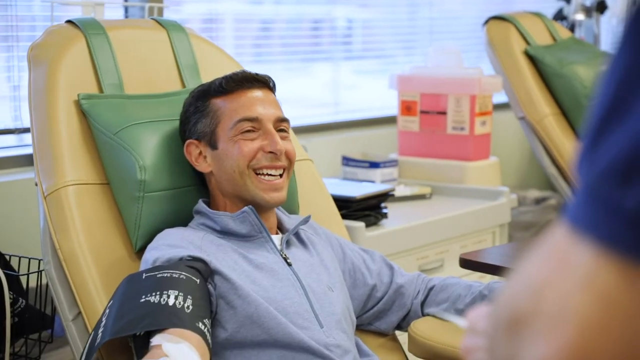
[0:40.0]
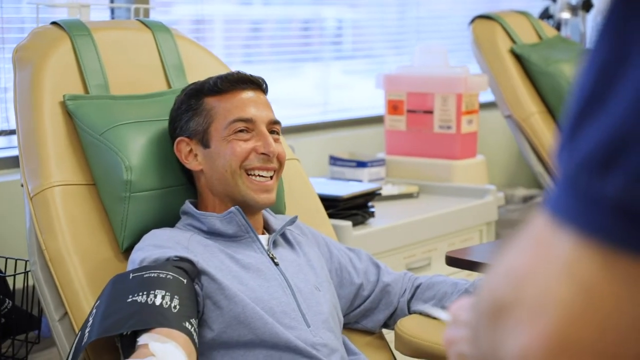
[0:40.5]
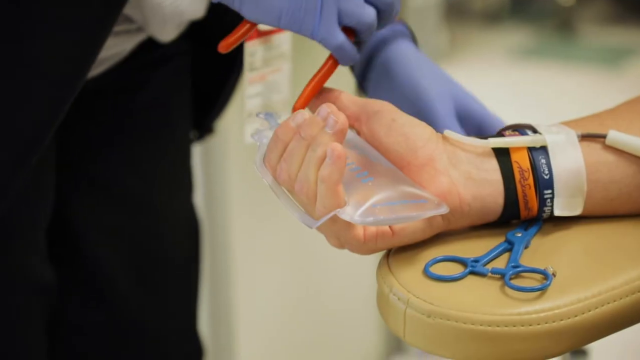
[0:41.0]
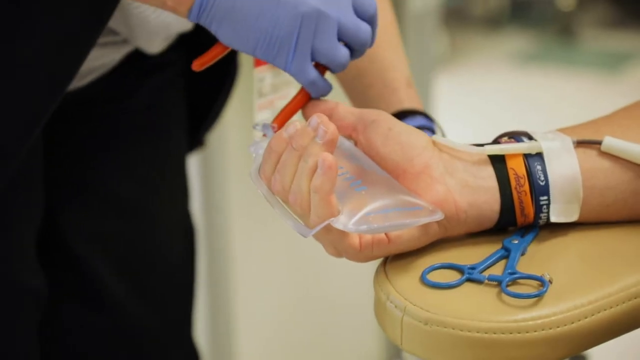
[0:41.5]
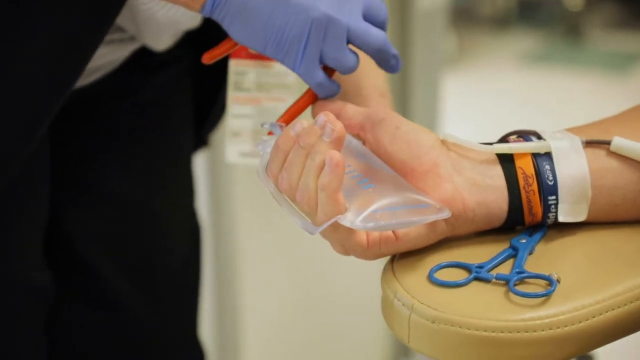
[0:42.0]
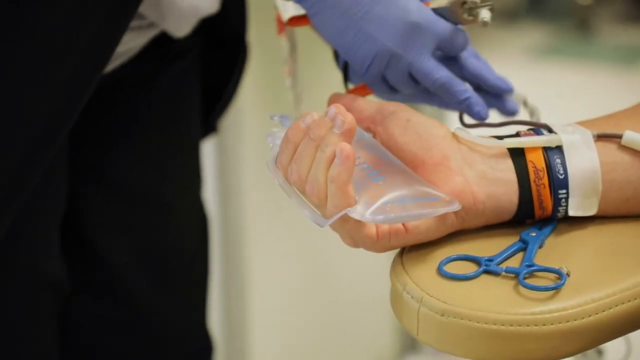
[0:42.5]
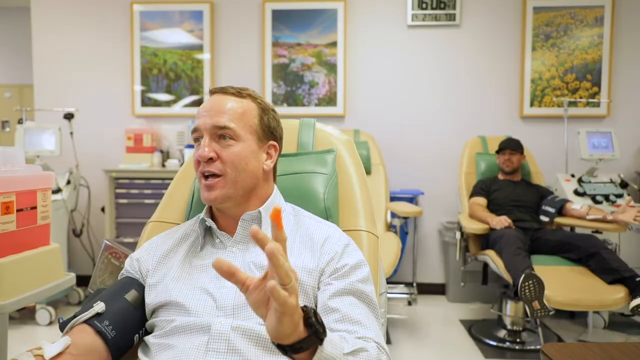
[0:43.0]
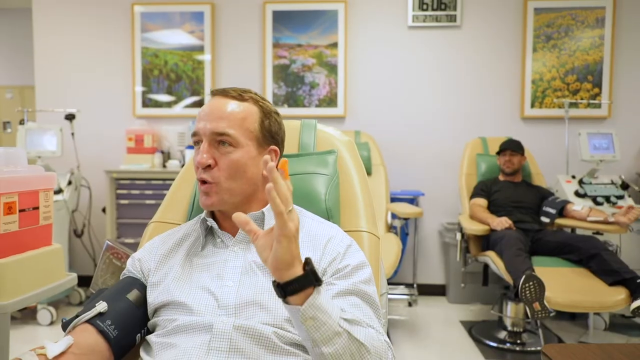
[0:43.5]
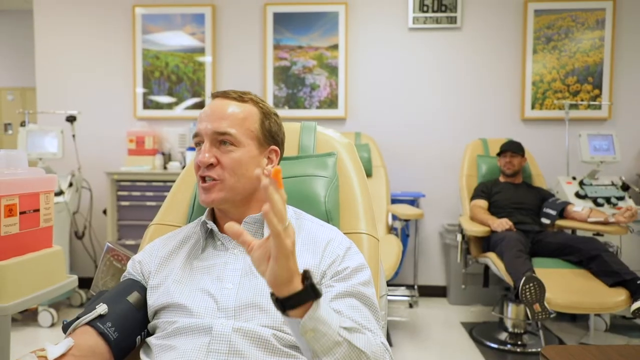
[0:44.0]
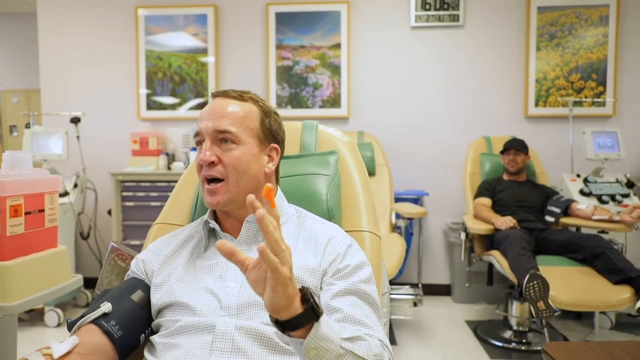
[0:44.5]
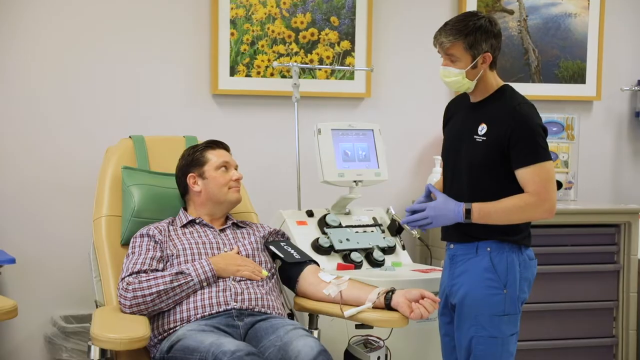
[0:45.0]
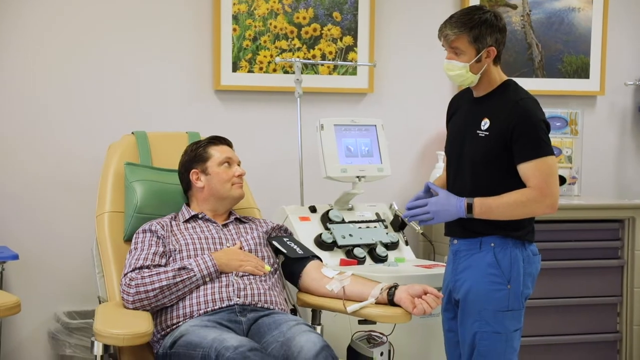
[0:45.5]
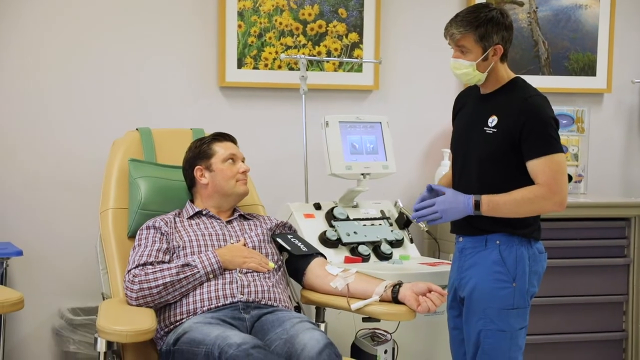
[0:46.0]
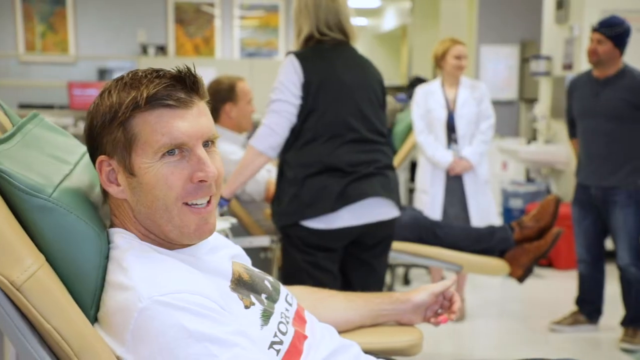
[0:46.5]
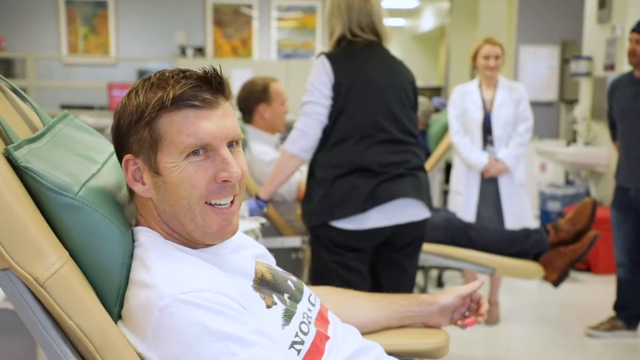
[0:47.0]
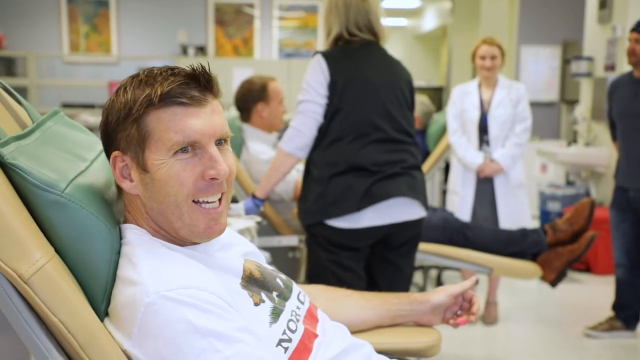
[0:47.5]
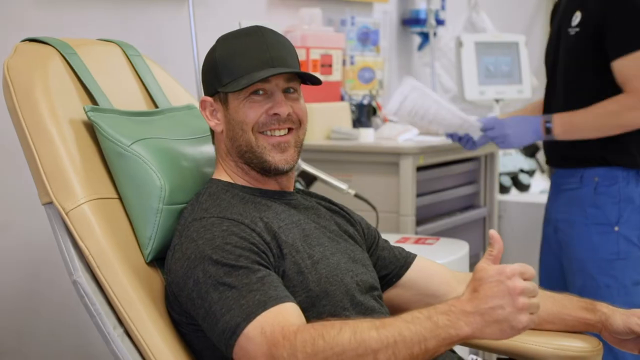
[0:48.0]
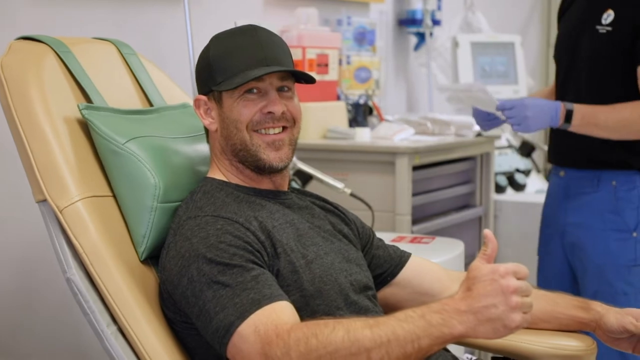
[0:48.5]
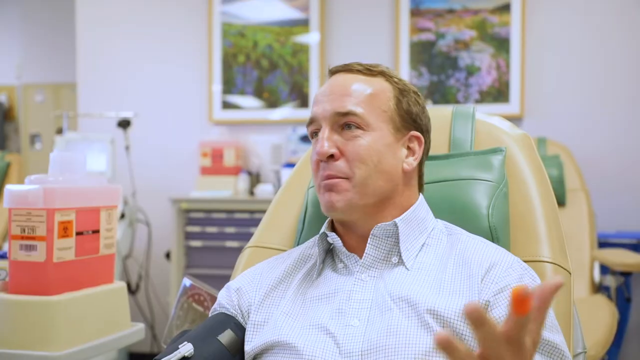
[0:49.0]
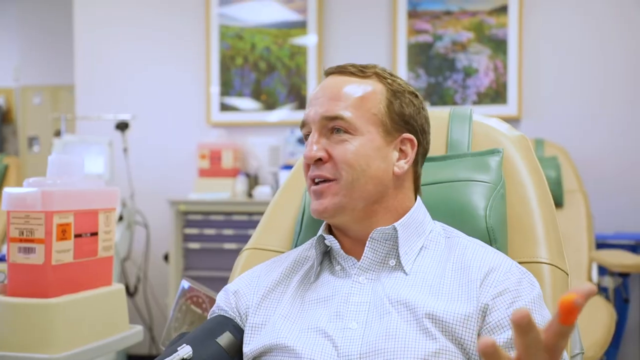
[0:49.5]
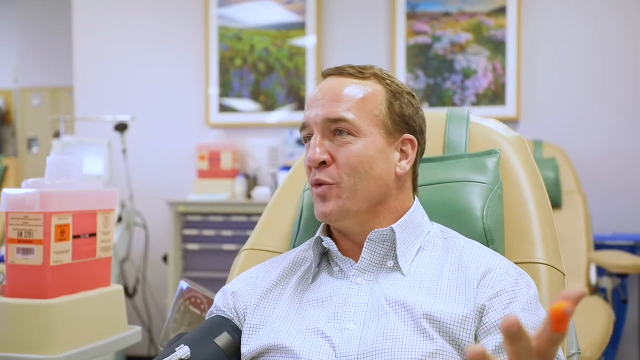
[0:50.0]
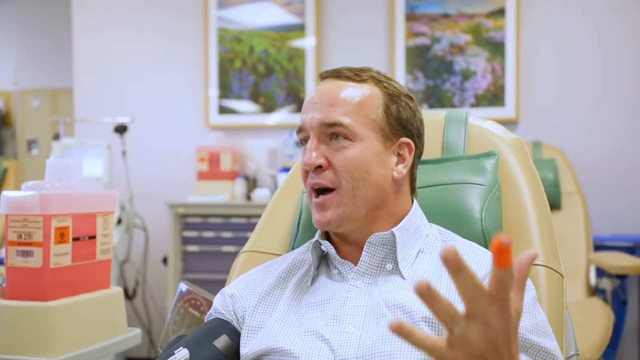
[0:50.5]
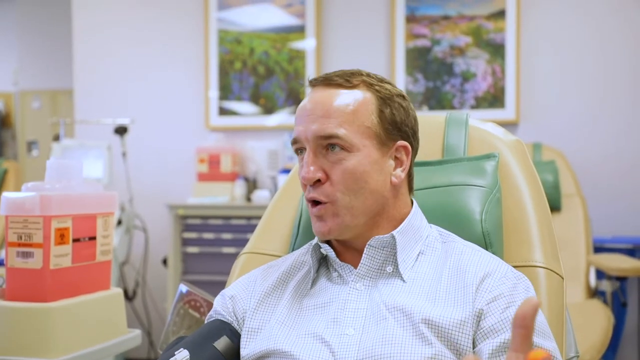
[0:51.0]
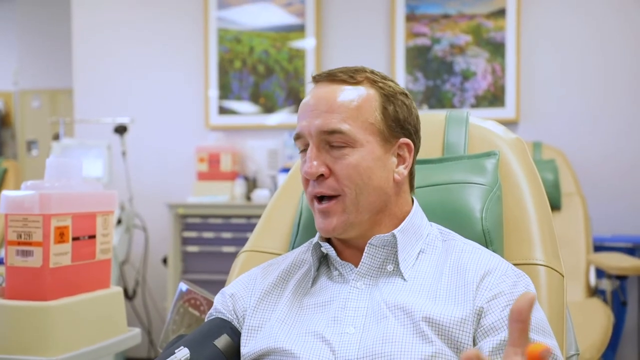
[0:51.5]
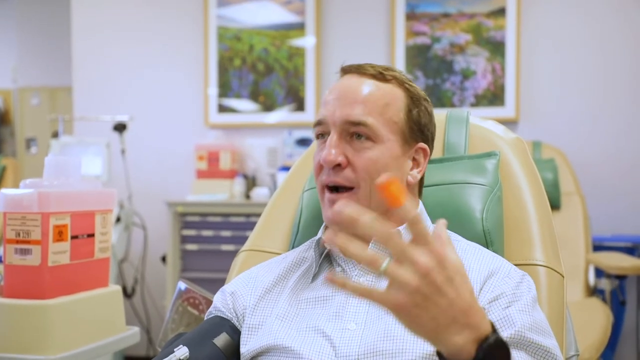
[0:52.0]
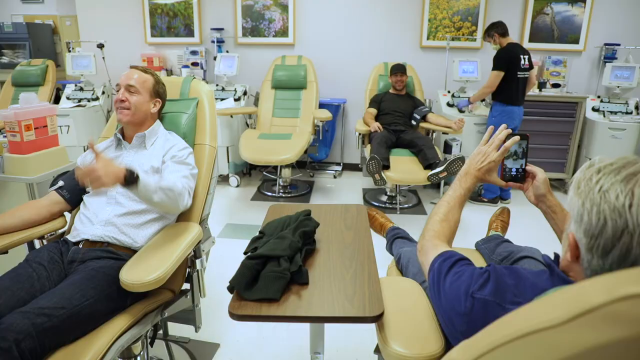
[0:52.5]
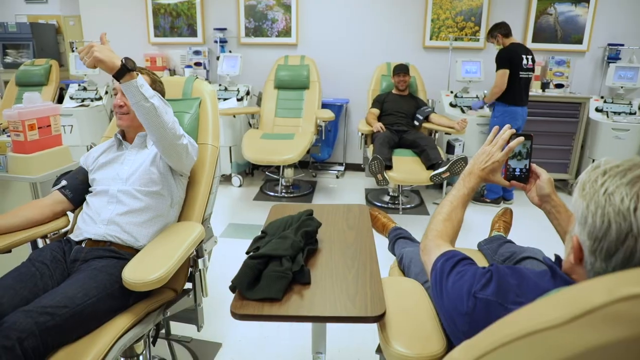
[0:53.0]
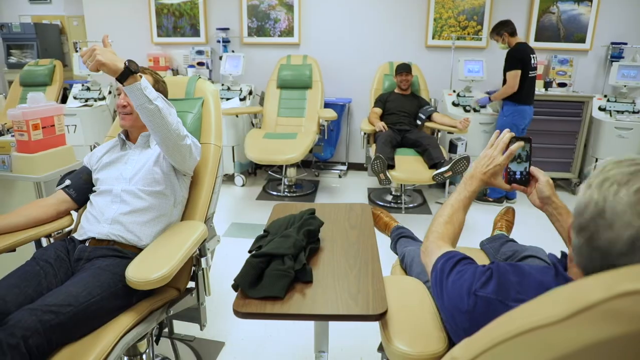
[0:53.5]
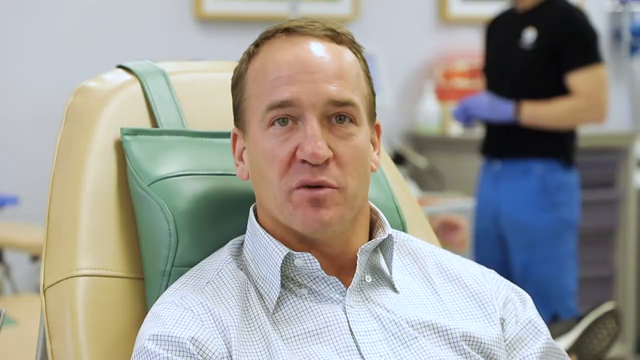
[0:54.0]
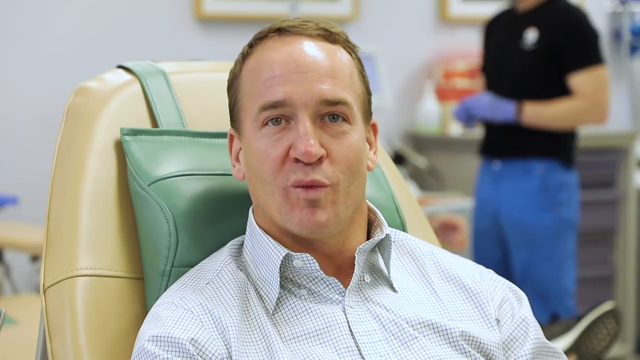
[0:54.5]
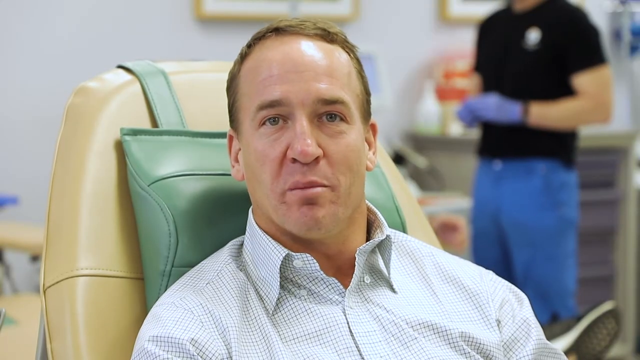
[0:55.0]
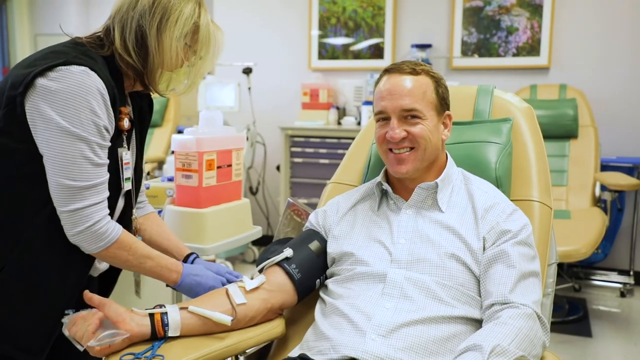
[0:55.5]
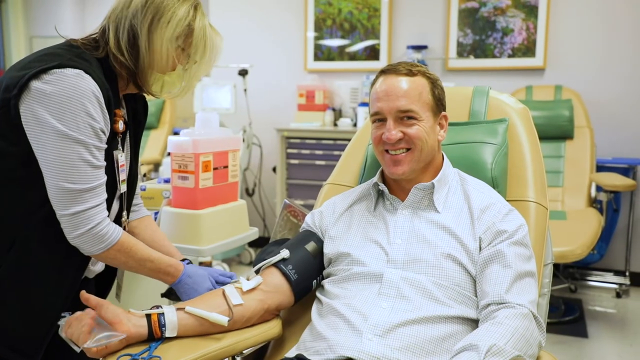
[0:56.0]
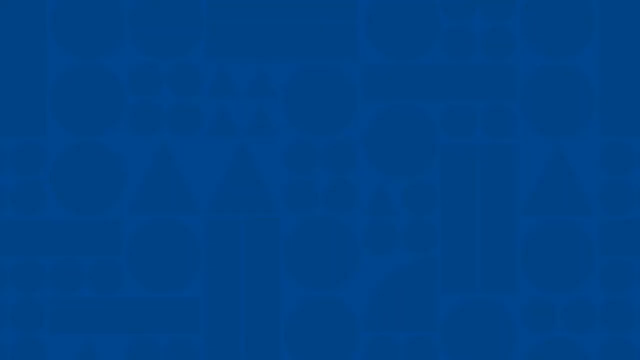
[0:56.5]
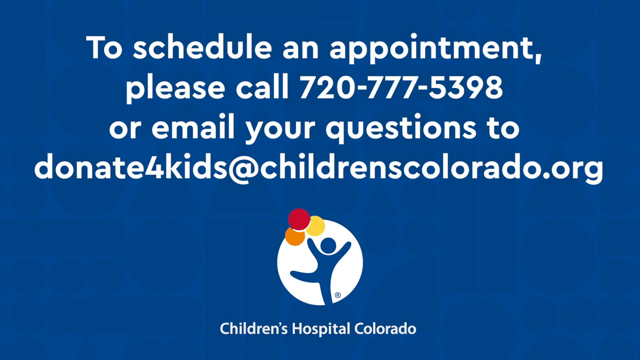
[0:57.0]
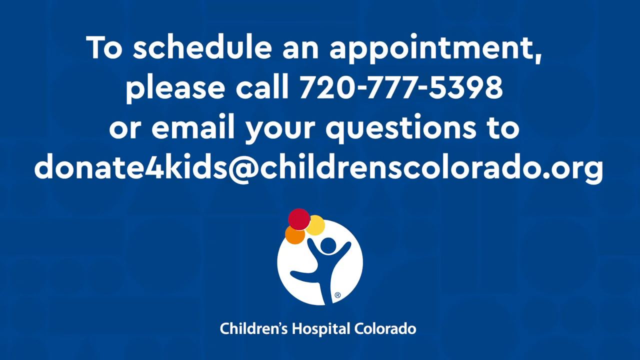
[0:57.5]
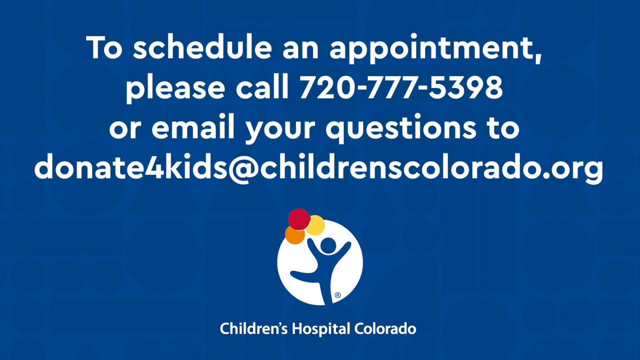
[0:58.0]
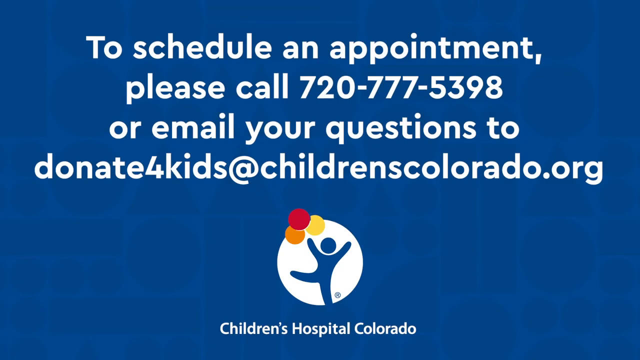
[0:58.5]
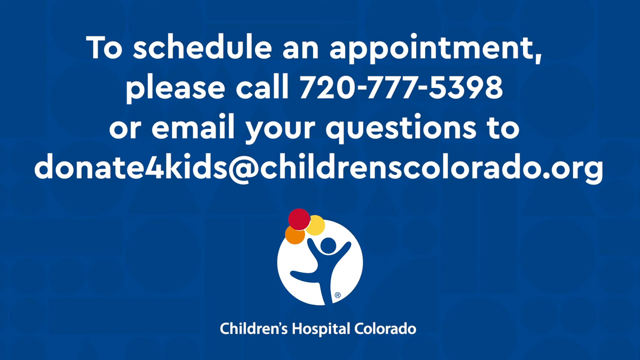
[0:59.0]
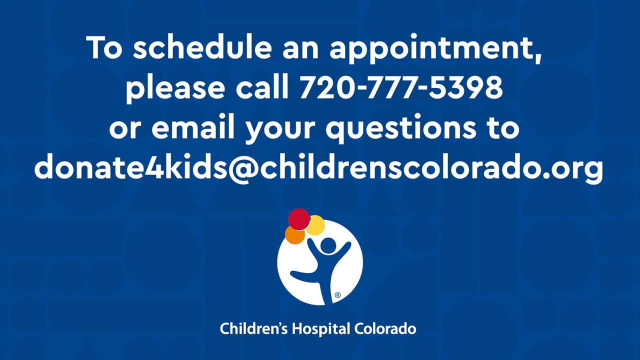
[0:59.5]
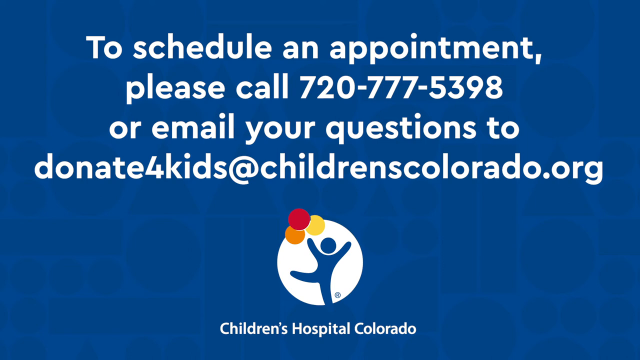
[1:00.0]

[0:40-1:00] Someone holds a plastic see-through bag in their hand, seemingly gripping it. A wider shot shows Peyton Manning in the same position, gesturing with his left hand. Another donor is shown in a sort of checked long-sleeve button-up shirt, laying back with what looks like a blood pressure cuff on his arm and an IV-type line through his arm. A man wearing a beige mask stands before him, dressed in a short black shirt with sort of a logo on it, white-blue tight pants and rubber gloves. Next, apparently another donor is shown wearing a white California t-shirt with a bear on it; he has shortish brown hair and blue eyes and is talking and smiling. Another man gives a right thumbs-up; he wears a light gray t-shirt and a gray hat, has kind of a scruffy beard and is very fit. The video then cuts back to Peyton Manning talking.